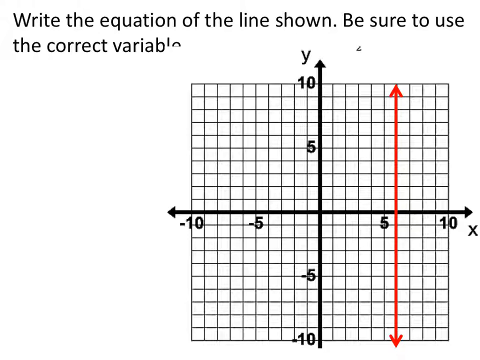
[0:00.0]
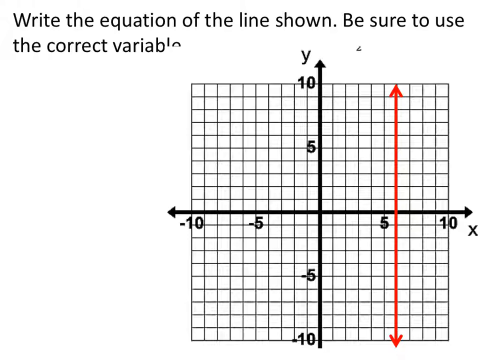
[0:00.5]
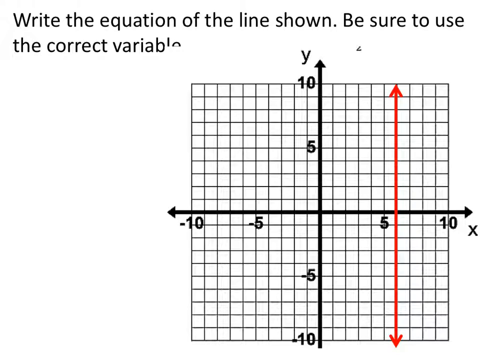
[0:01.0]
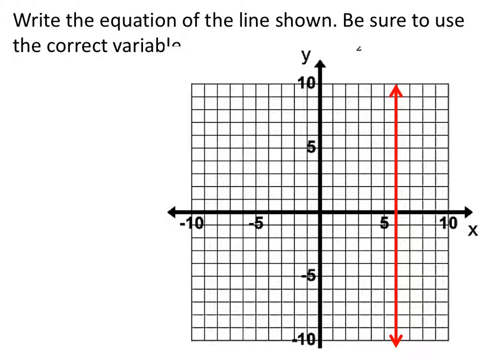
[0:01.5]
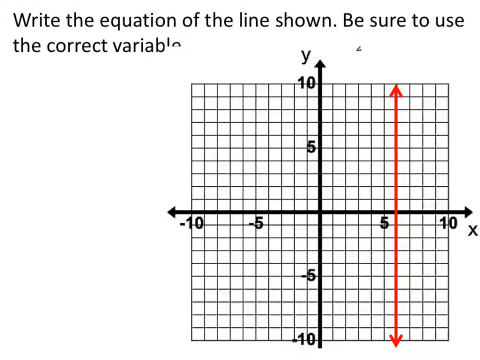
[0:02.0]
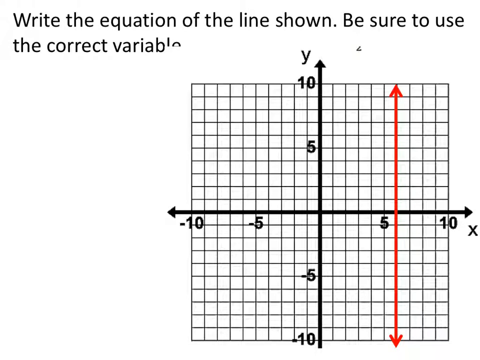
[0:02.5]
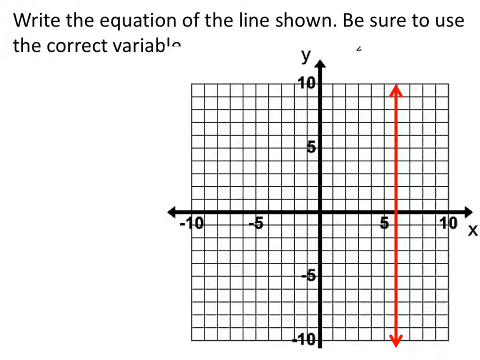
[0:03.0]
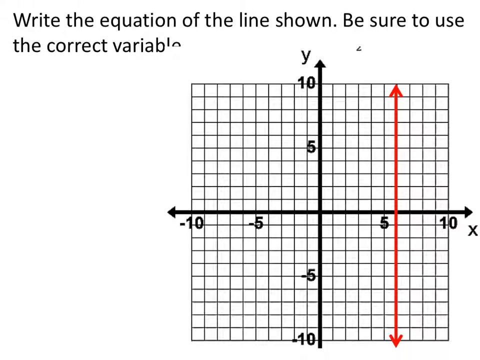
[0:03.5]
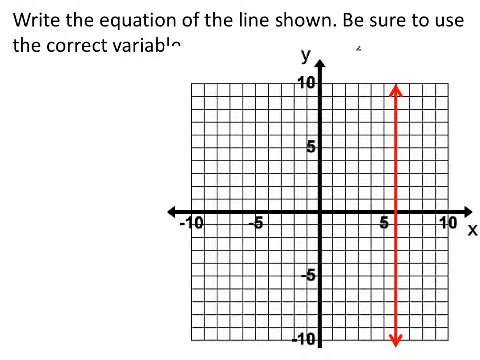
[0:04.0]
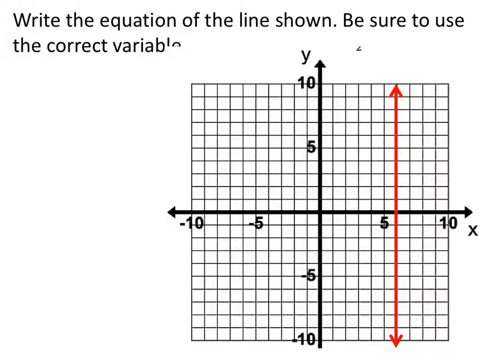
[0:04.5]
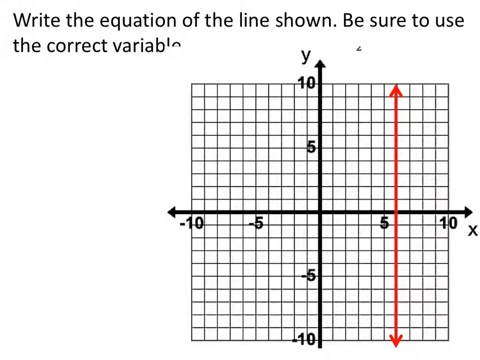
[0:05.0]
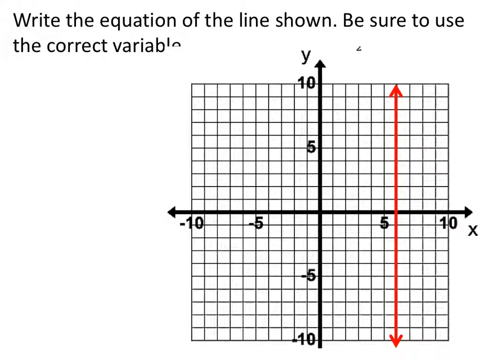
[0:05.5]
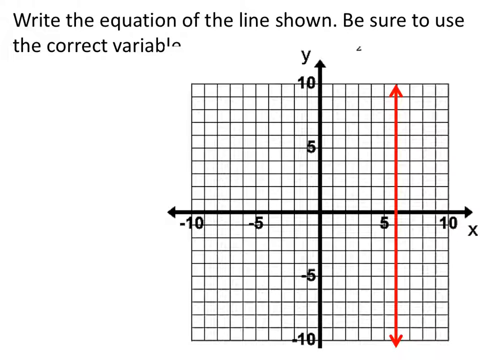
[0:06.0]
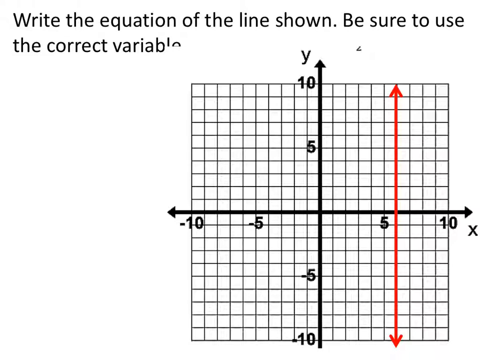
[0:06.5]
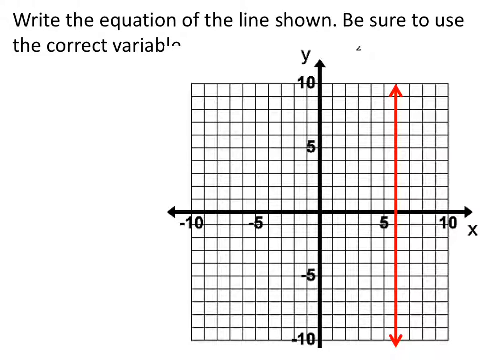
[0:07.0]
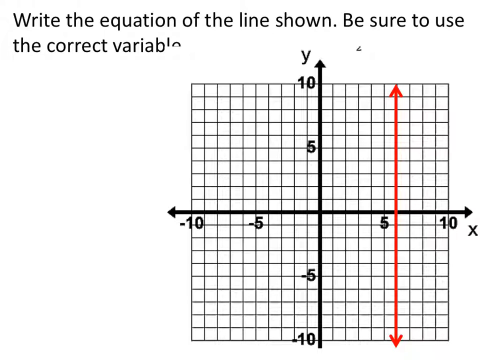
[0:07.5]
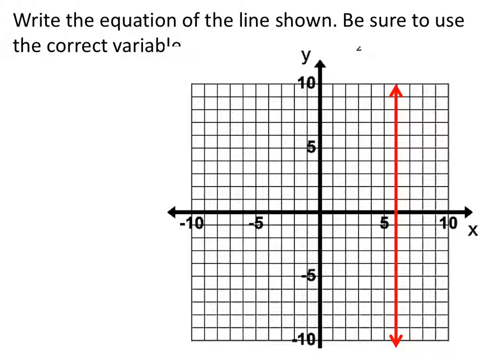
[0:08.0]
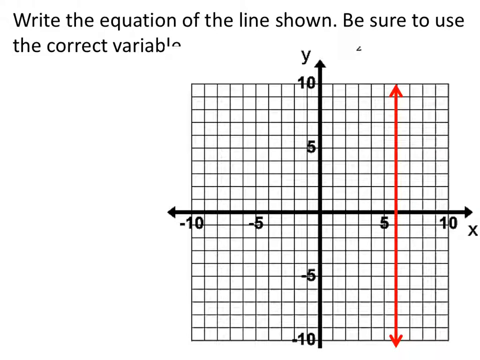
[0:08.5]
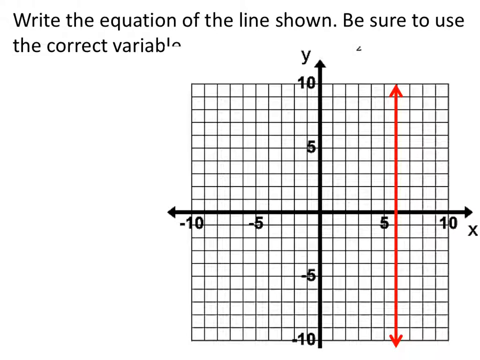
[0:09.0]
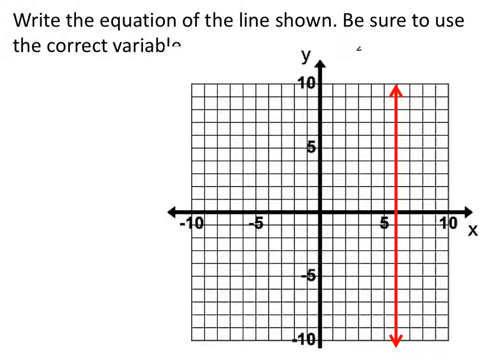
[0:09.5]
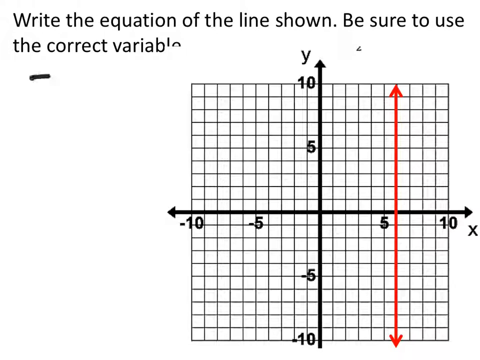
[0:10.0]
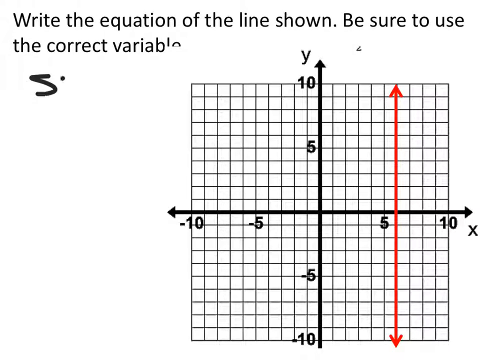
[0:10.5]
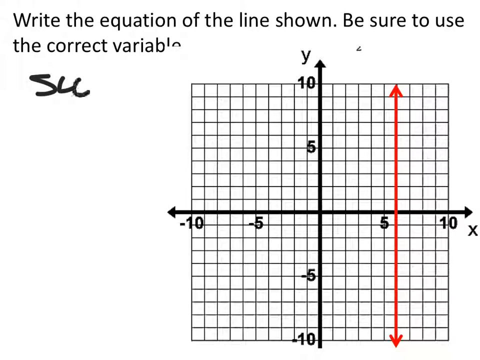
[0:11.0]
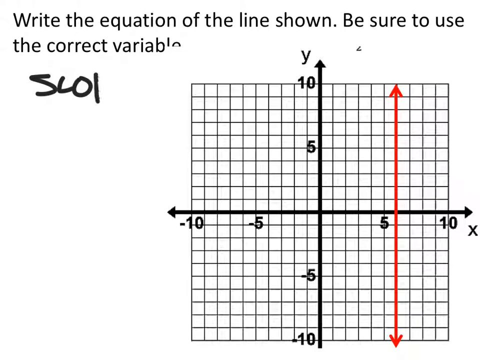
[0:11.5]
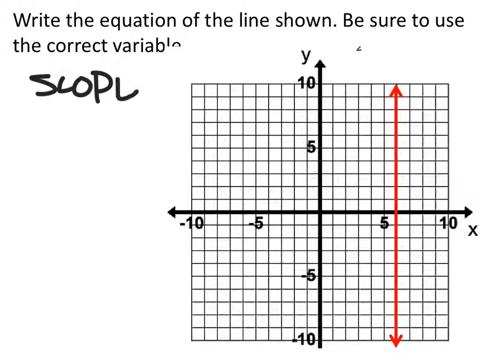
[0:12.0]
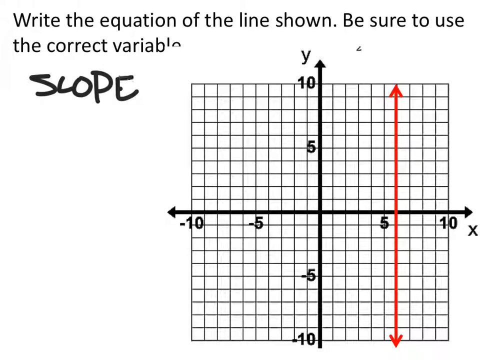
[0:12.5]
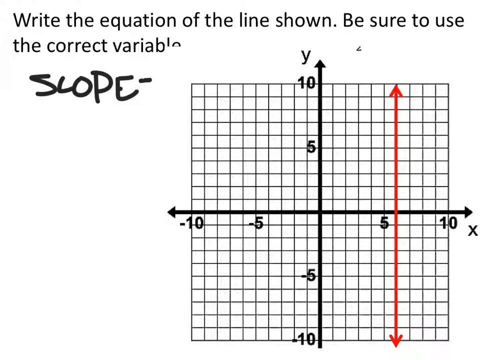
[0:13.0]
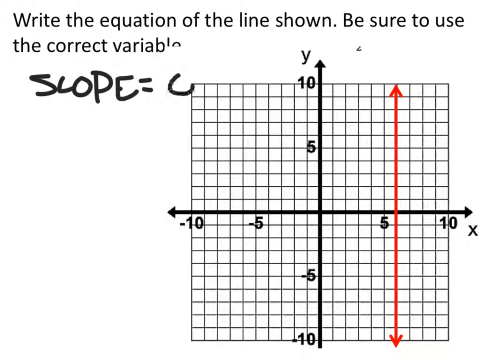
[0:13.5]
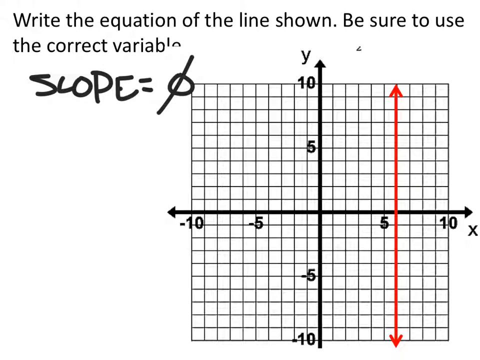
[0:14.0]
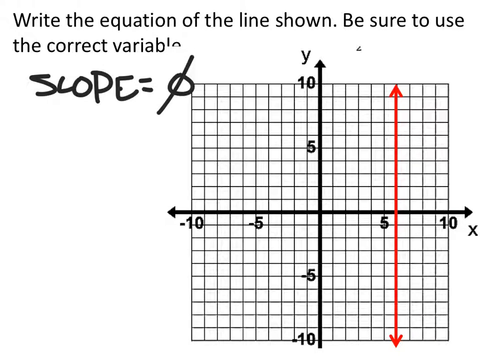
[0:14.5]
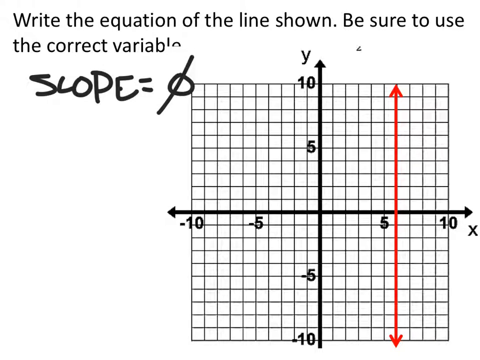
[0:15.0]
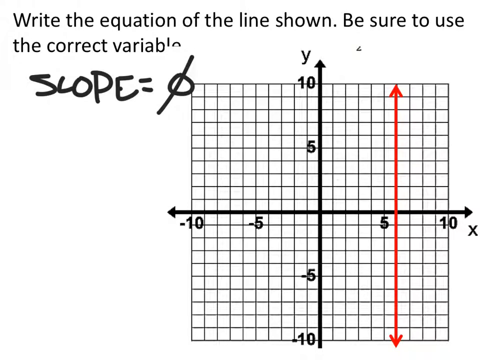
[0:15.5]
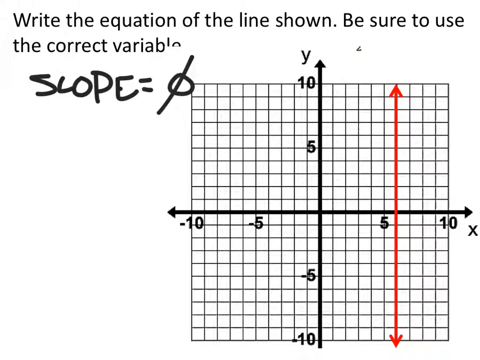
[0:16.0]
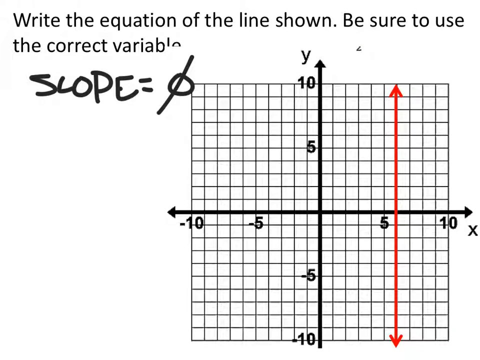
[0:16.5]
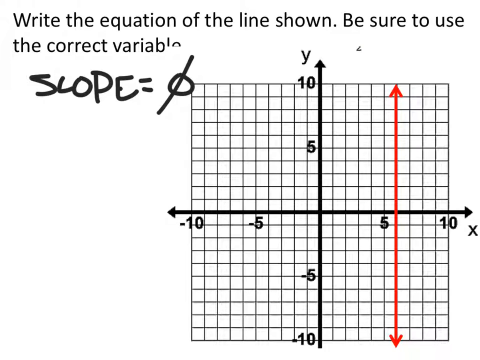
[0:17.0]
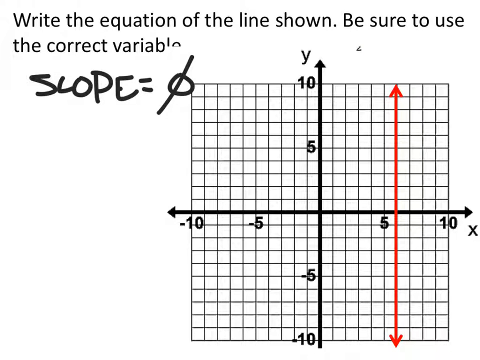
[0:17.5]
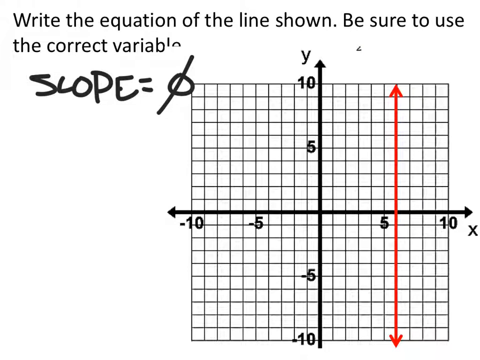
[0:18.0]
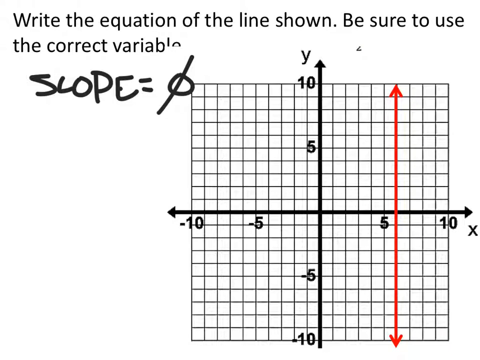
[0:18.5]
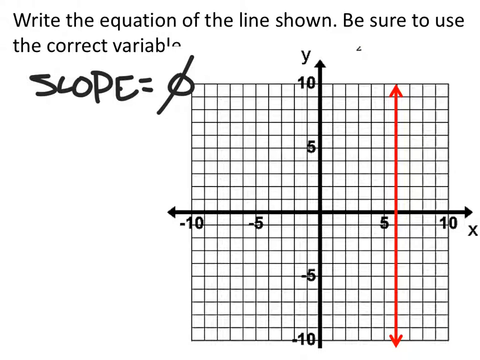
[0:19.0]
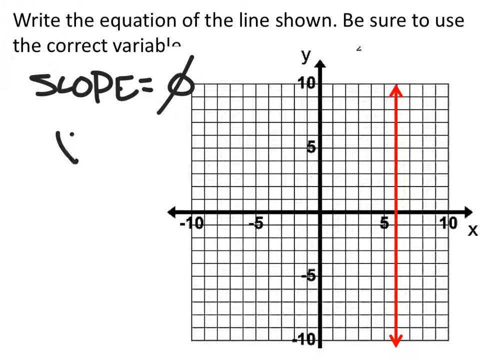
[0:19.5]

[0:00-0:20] A page shows the written instructions "write the equation of the line shown, and be sure to use the correct variables," apparently directed at students. Below is a graph made of many small horizontal and vertical lines that form squares. The graph is divided into four, with an arrow labeled y and one labeled x, and numbers such as 10 and 5 run along the horizontal and vertical axes. The word "slope" is written in pen, apparently part of an equation, possibly an example of one.